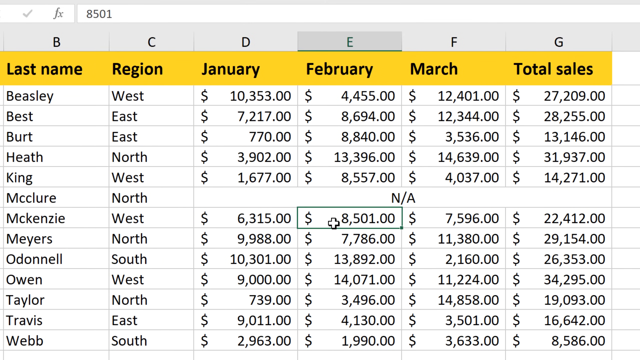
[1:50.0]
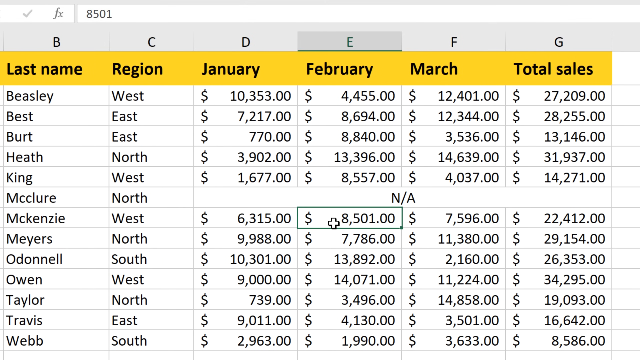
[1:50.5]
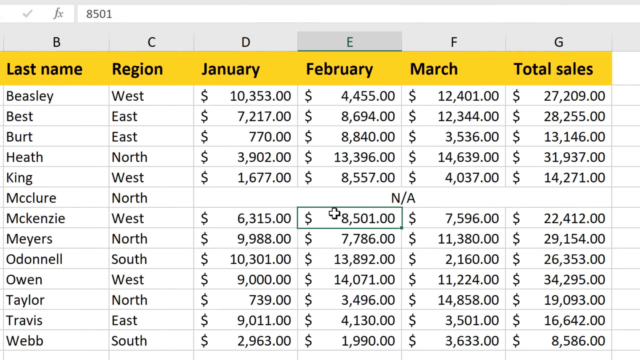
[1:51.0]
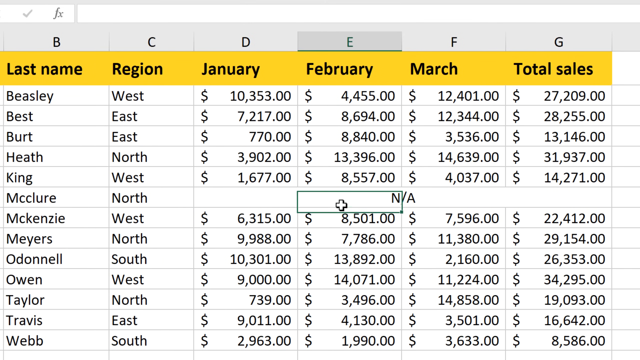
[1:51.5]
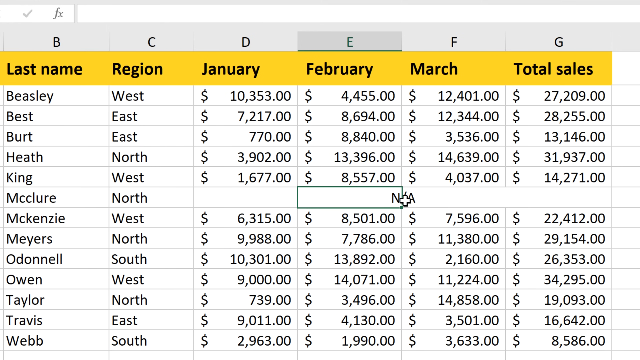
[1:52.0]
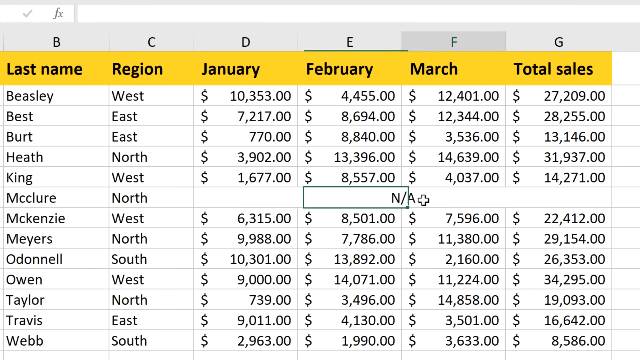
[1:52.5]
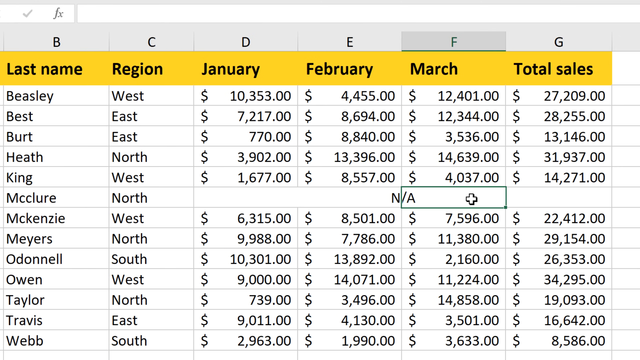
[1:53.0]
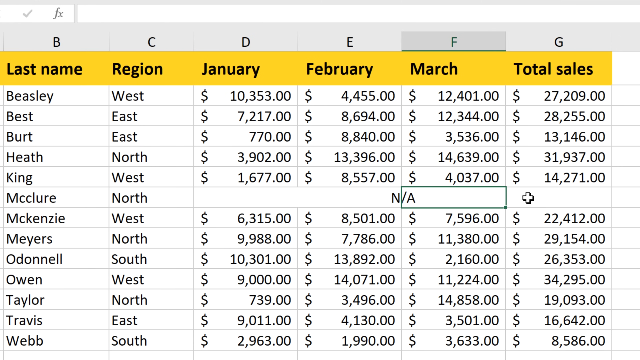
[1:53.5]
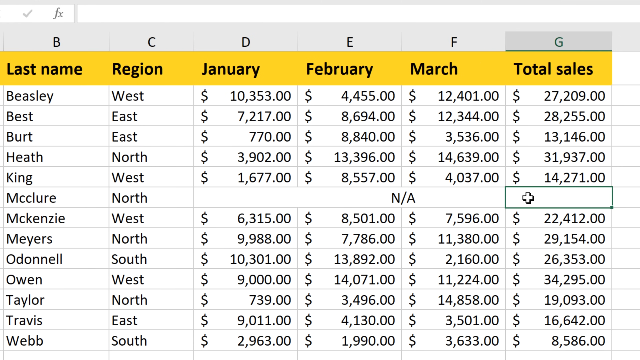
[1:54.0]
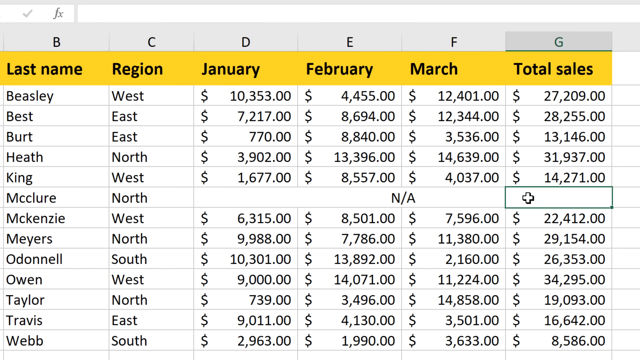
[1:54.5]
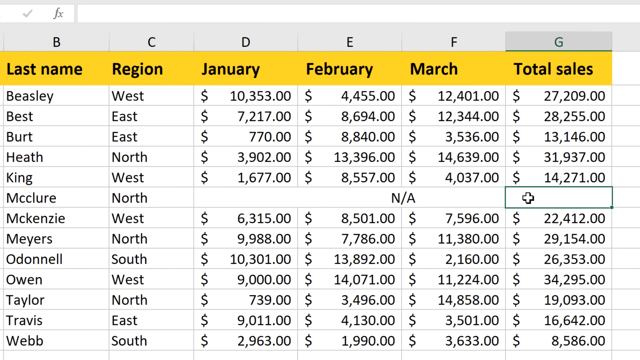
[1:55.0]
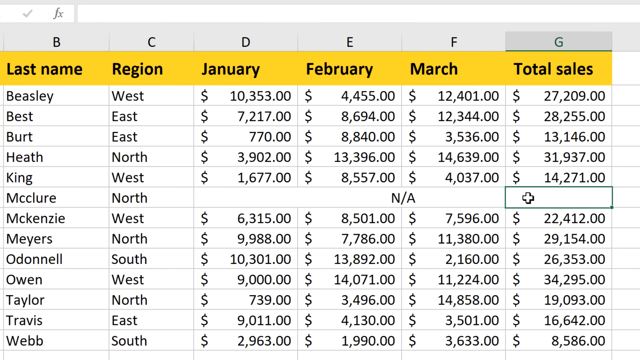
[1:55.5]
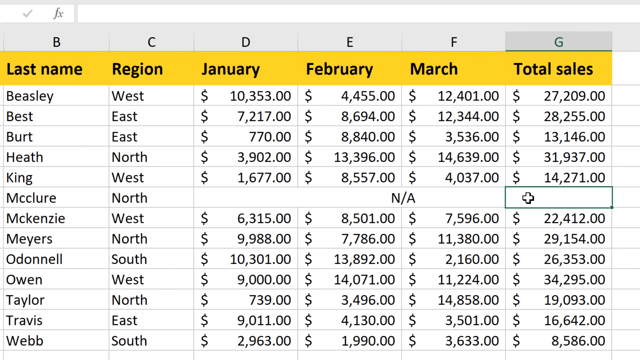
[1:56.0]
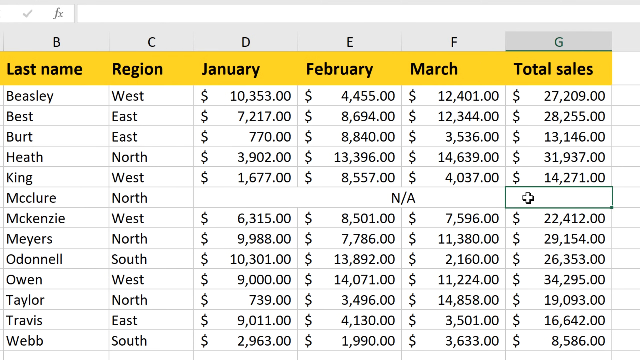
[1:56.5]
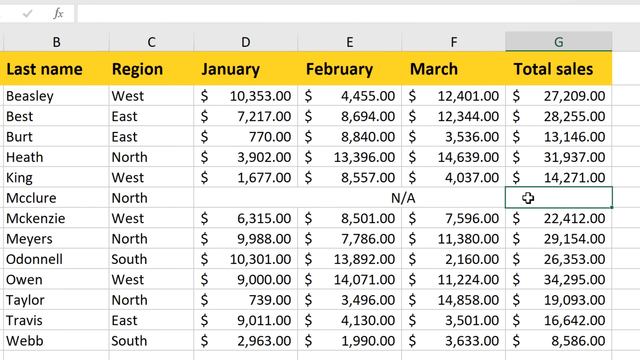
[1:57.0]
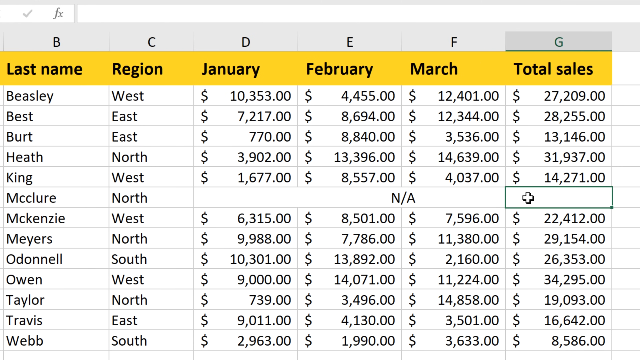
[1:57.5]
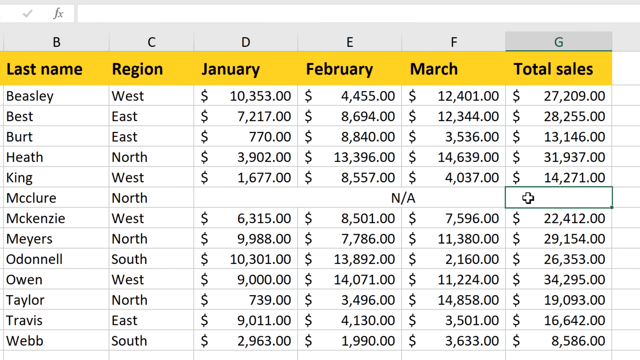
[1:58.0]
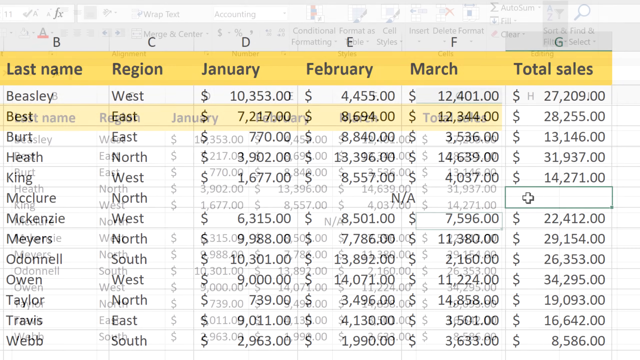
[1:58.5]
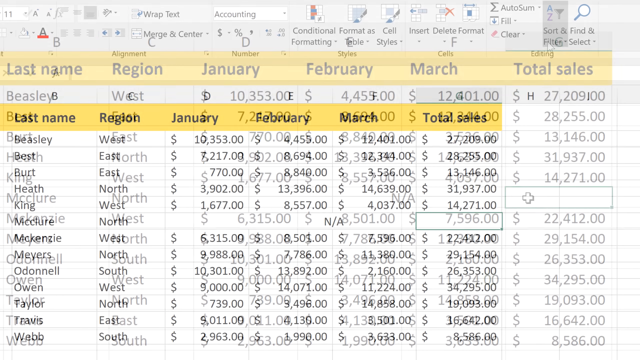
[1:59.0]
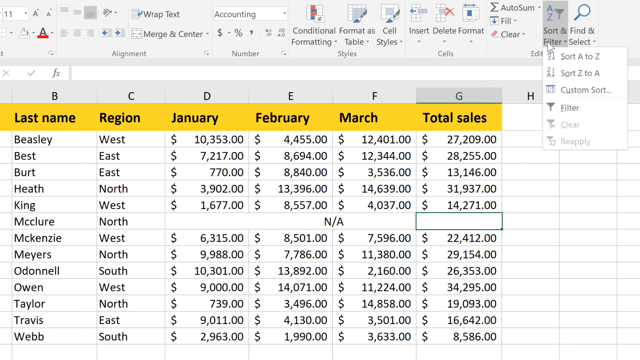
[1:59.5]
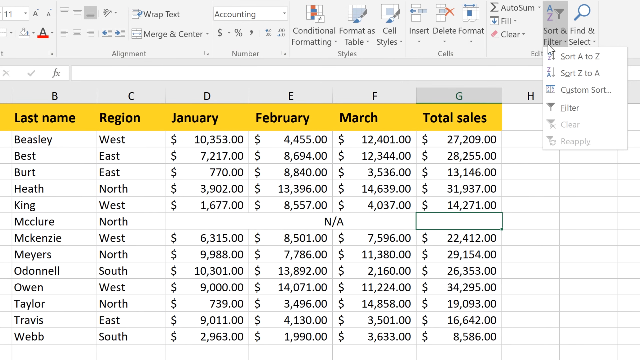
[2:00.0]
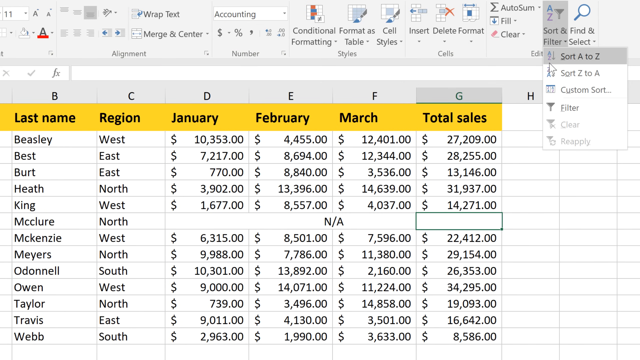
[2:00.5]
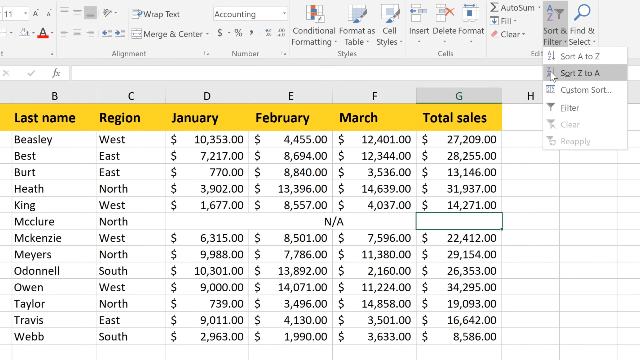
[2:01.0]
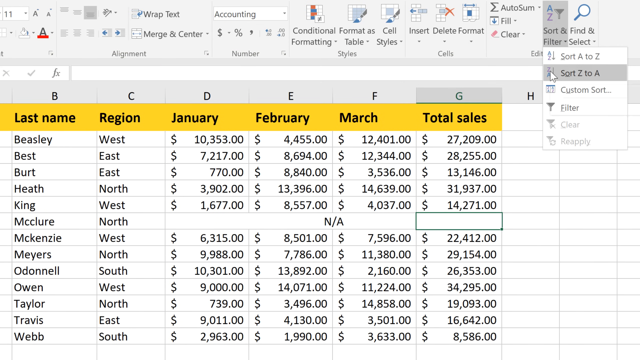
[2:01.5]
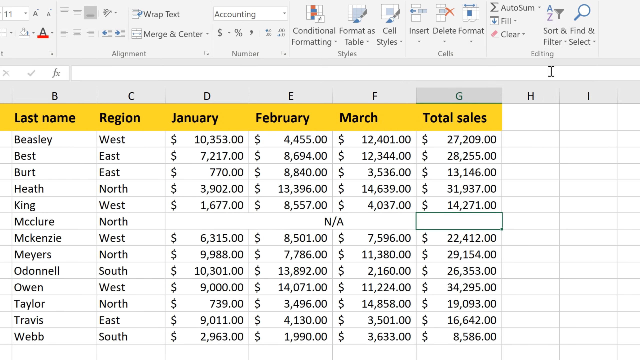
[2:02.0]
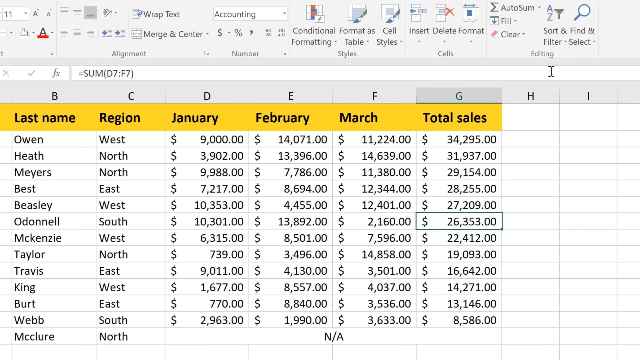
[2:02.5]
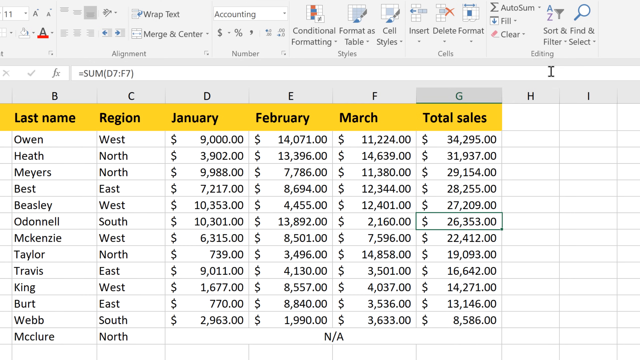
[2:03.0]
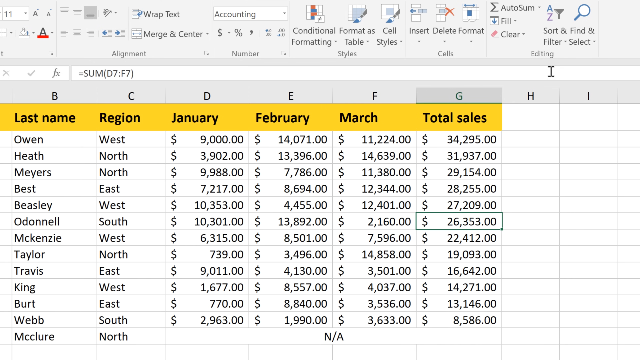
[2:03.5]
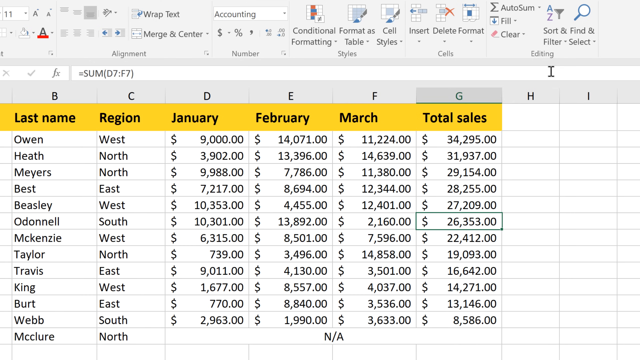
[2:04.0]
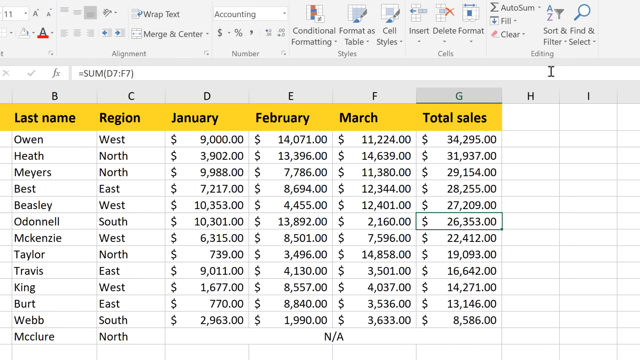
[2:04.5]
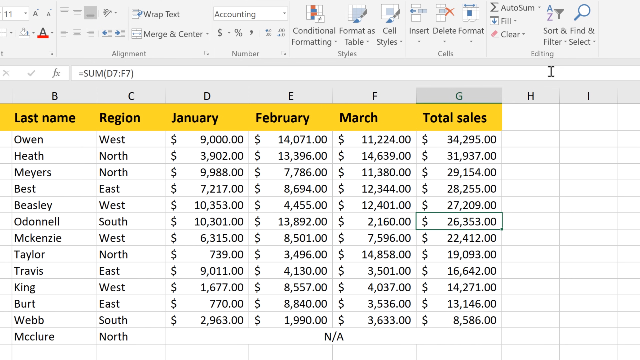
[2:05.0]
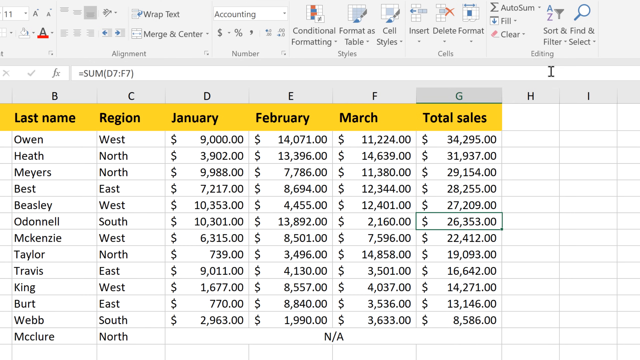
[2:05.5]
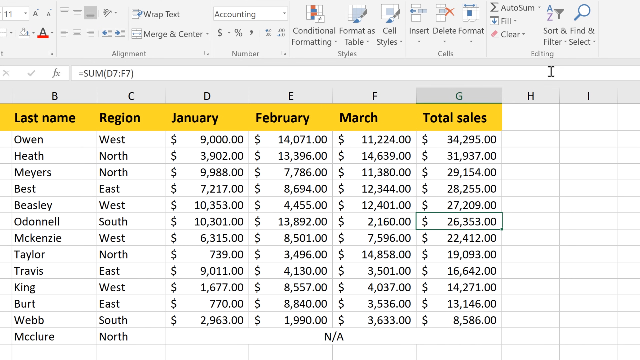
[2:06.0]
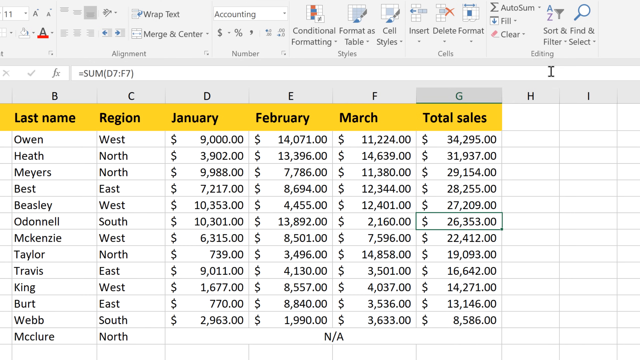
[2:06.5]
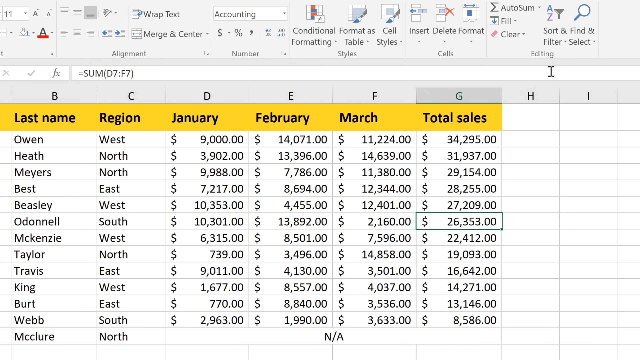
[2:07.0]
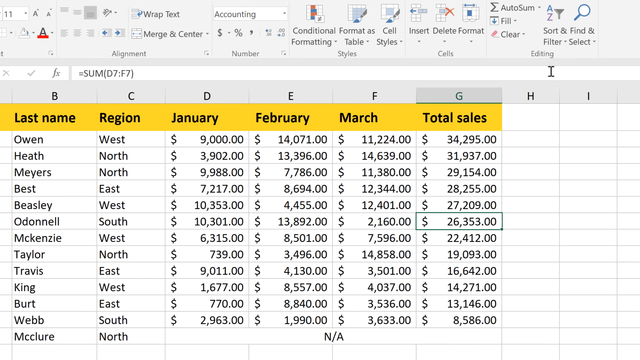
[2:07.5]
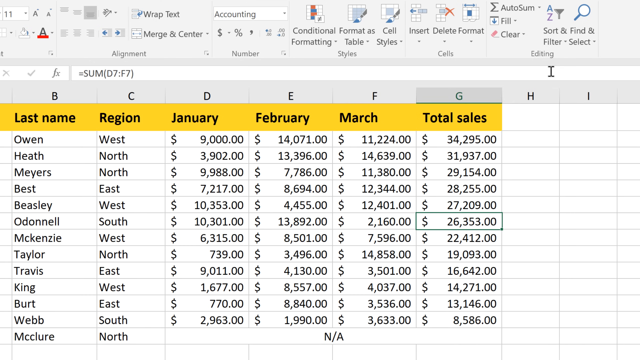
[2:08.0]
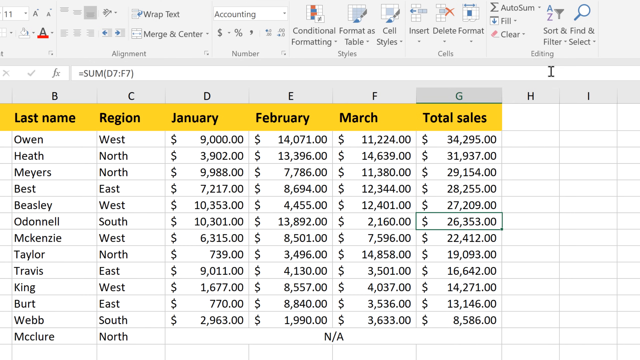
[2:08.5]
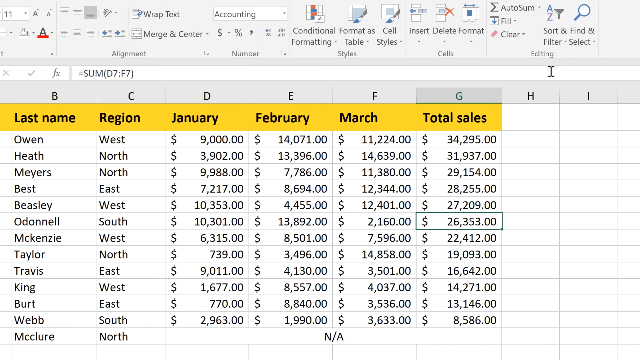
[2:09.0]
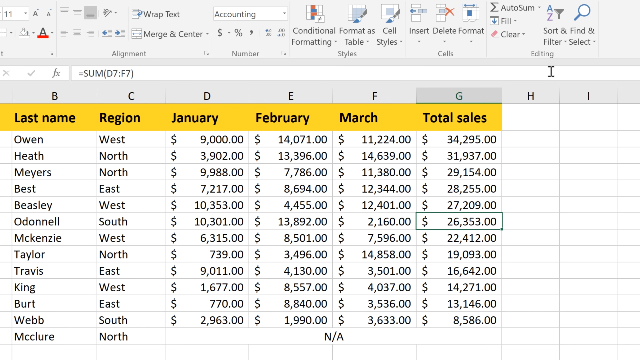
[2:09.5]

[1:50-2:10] The user selects the February column of the deleted data for the last name McClure, then moves to the F column and the G column, and the cursor remains in the G column for a few seconds. The camera zooms out a little on the data table, and the H and I columns appear, both empty. The user clicks "sort and filter," and from the drop-down options he selects "sort Z to A." The names appear to be rearranged within the table, and the only cell selected is the total sales for the last name O'Donnell, "$26,353.00." The row with the deleted data is now at the very bottom of the screen.